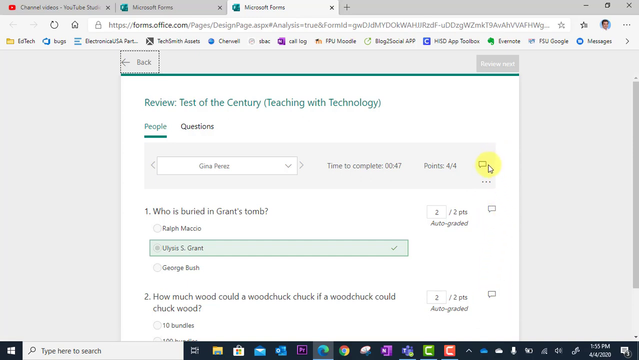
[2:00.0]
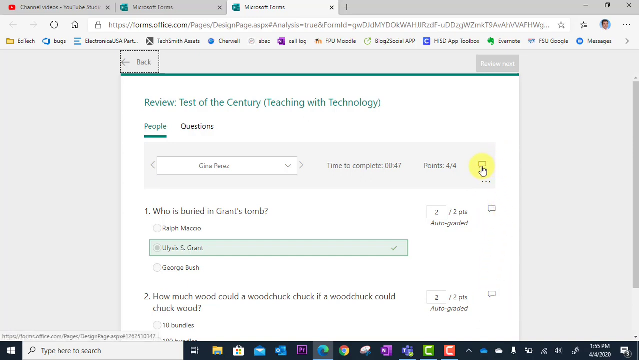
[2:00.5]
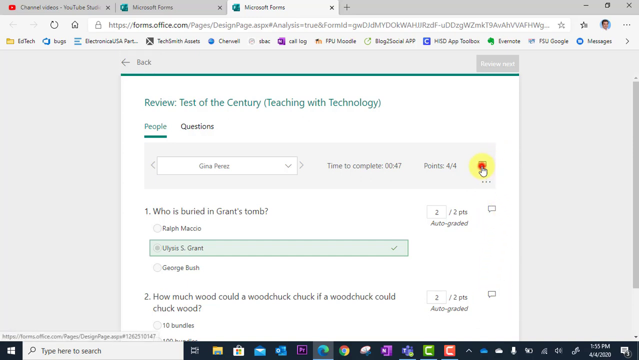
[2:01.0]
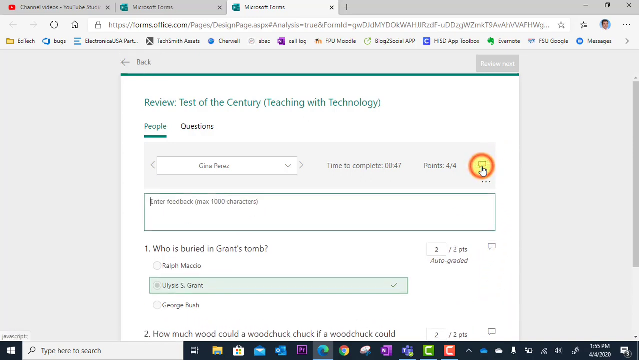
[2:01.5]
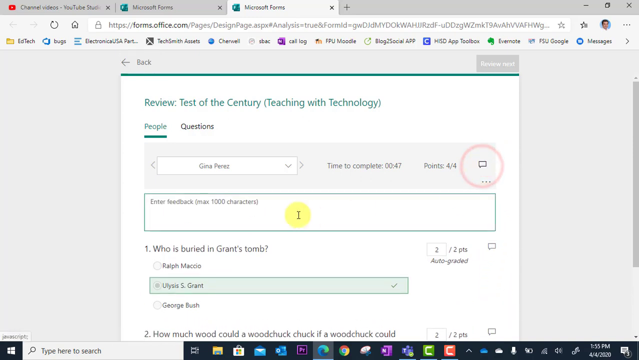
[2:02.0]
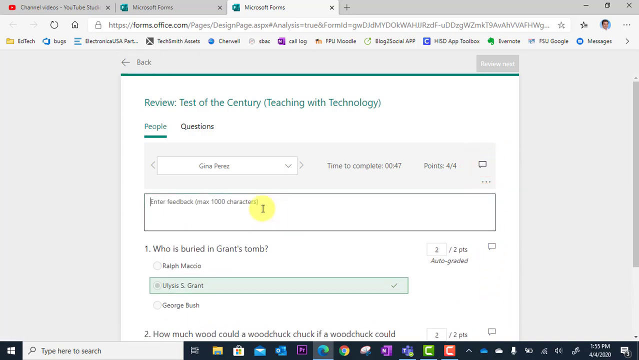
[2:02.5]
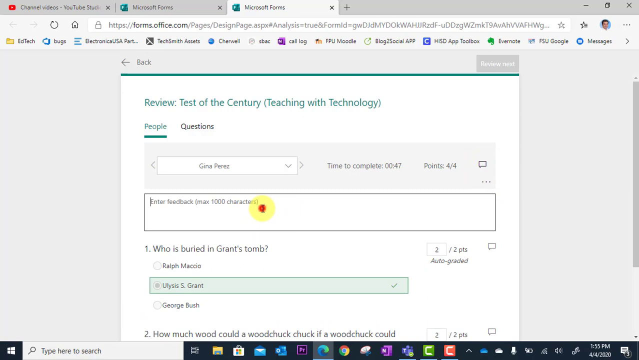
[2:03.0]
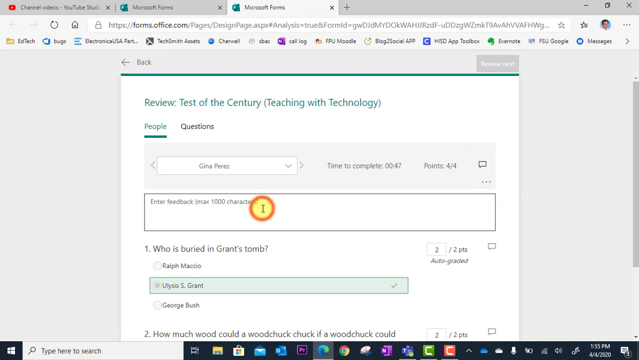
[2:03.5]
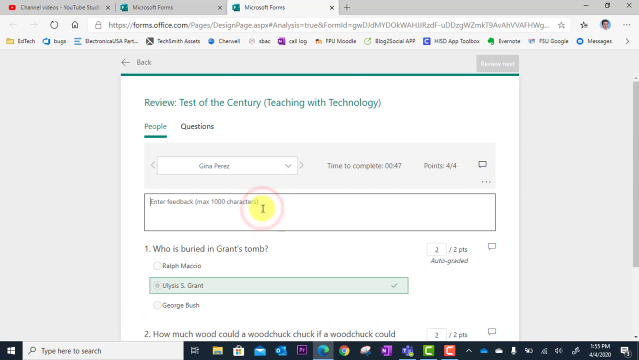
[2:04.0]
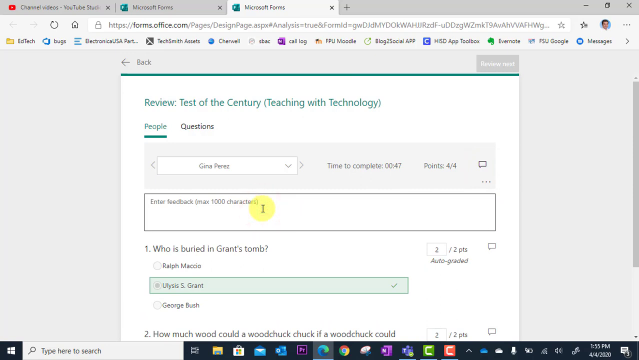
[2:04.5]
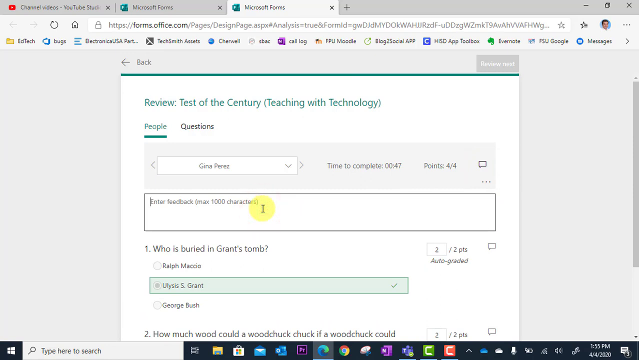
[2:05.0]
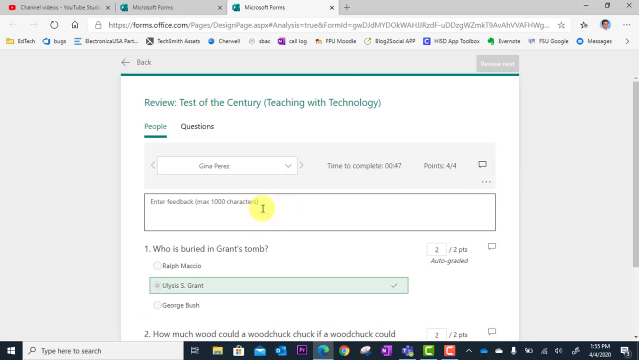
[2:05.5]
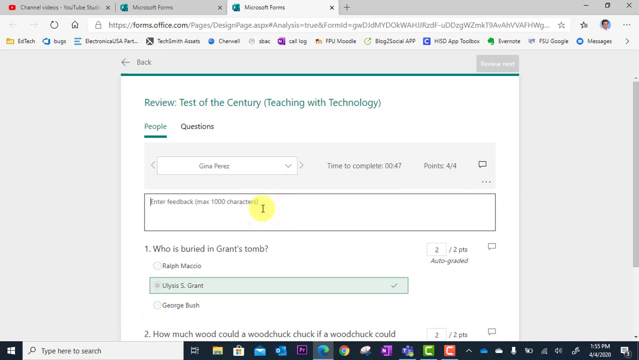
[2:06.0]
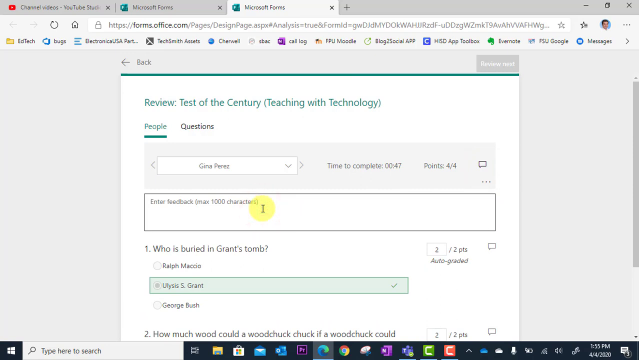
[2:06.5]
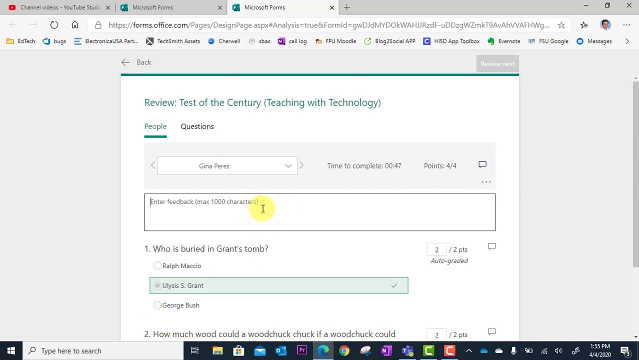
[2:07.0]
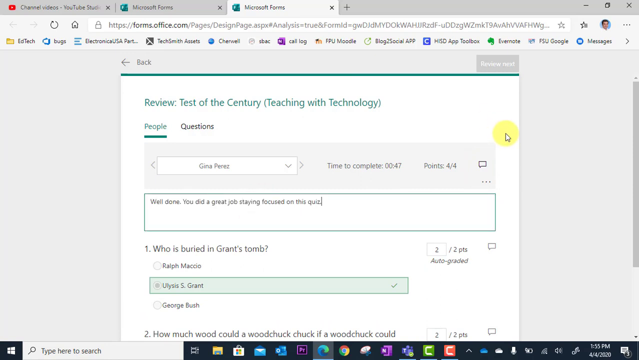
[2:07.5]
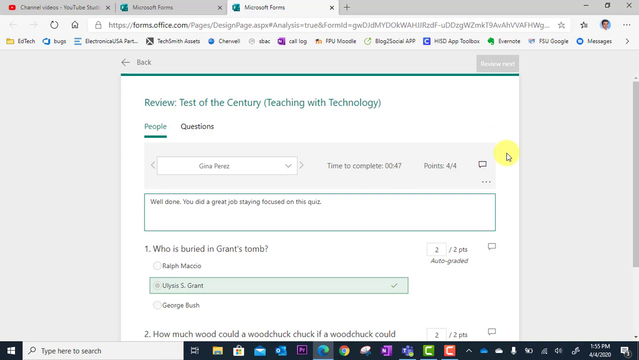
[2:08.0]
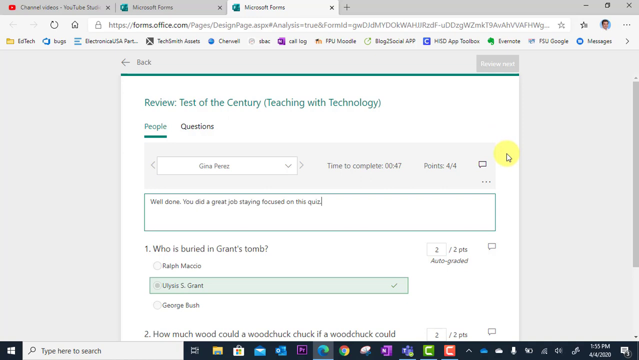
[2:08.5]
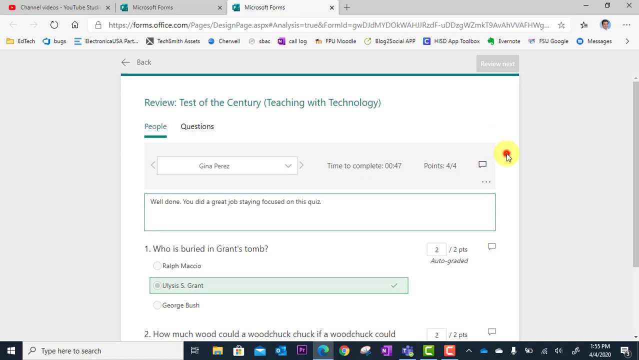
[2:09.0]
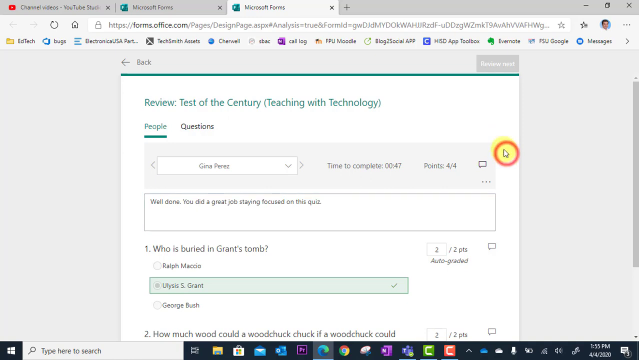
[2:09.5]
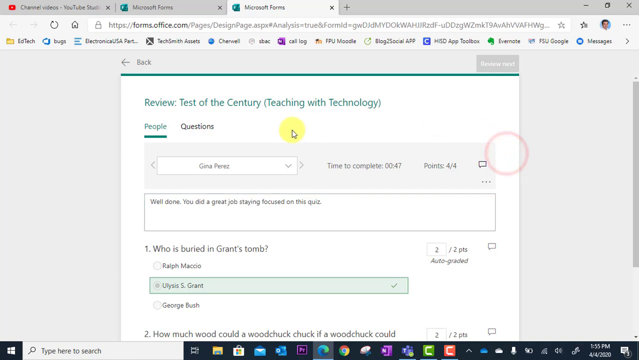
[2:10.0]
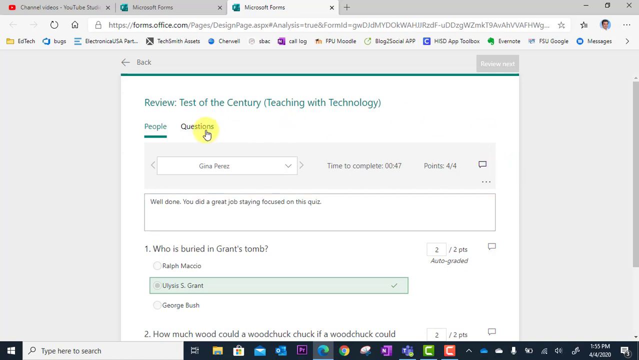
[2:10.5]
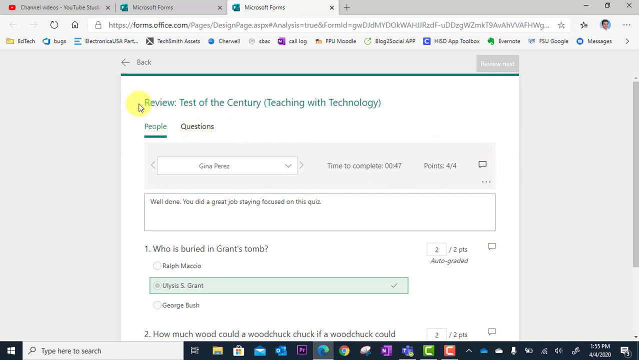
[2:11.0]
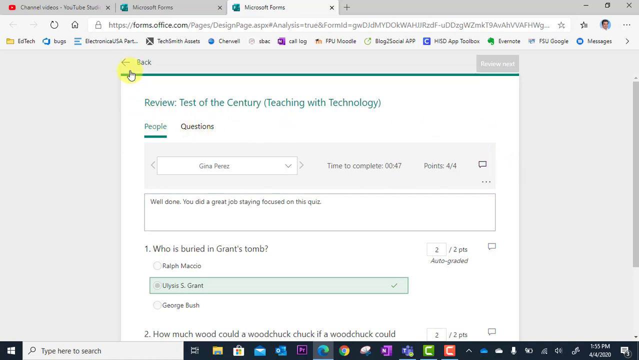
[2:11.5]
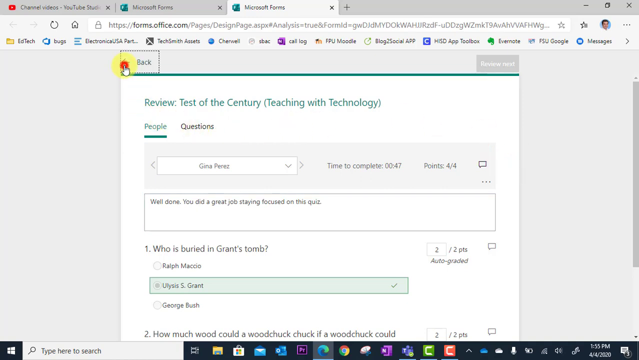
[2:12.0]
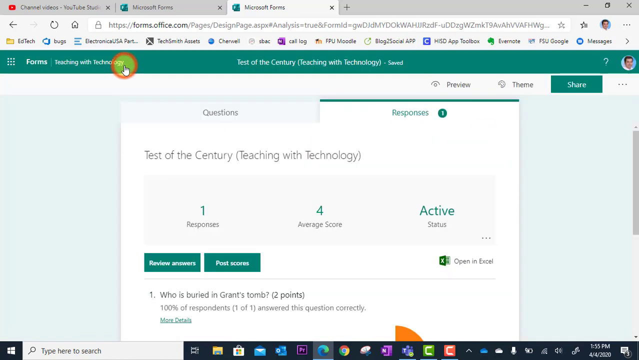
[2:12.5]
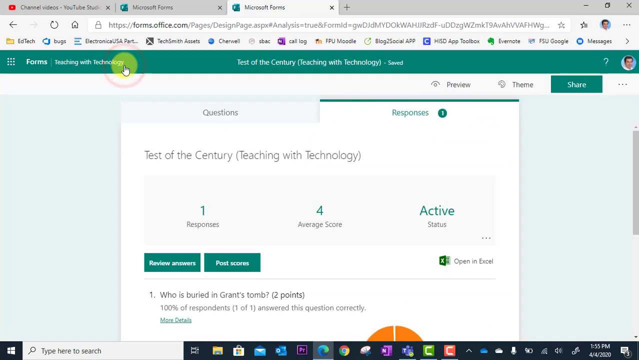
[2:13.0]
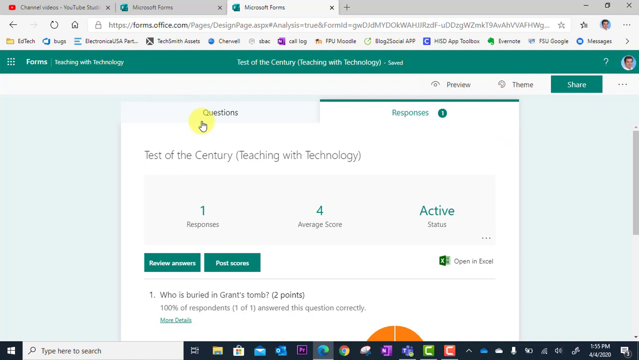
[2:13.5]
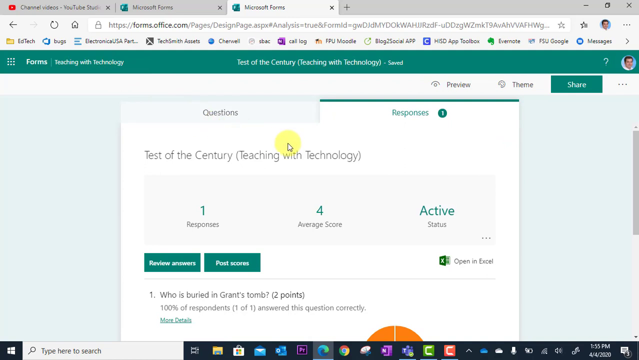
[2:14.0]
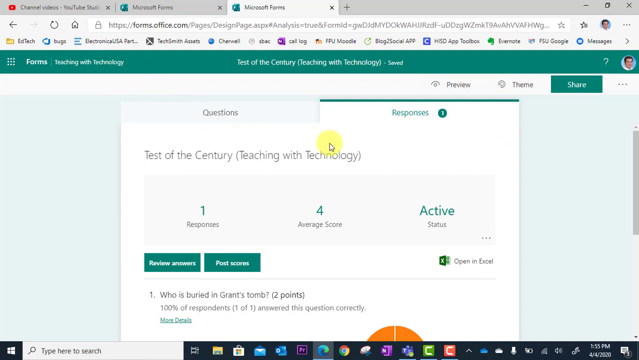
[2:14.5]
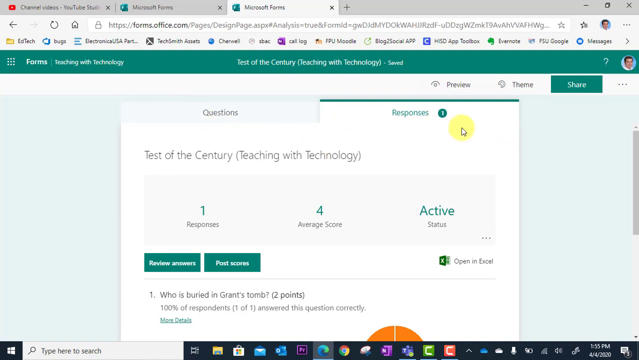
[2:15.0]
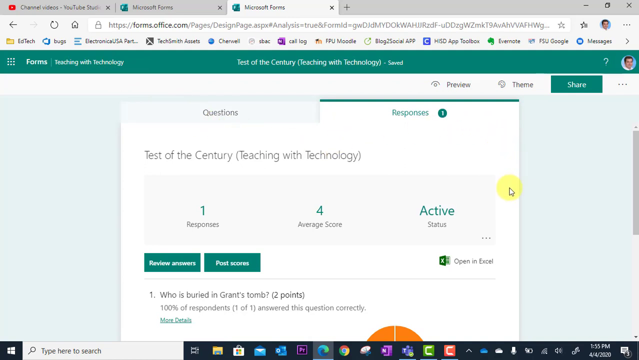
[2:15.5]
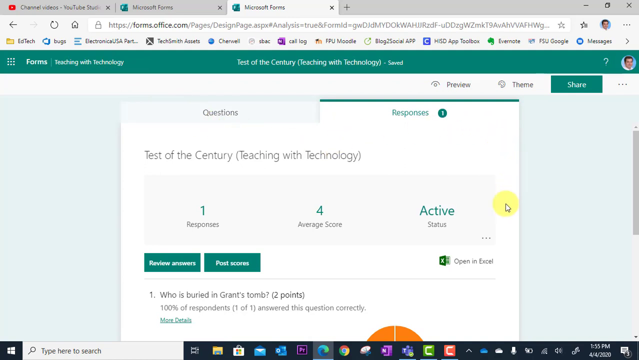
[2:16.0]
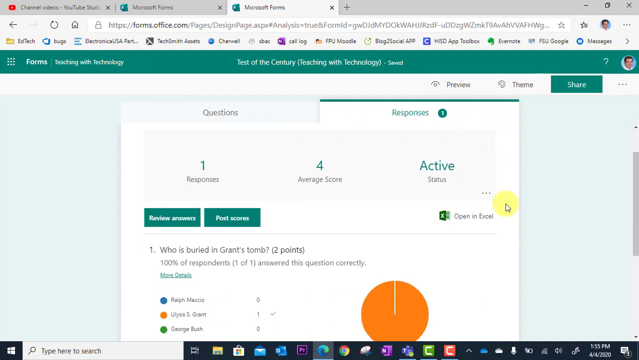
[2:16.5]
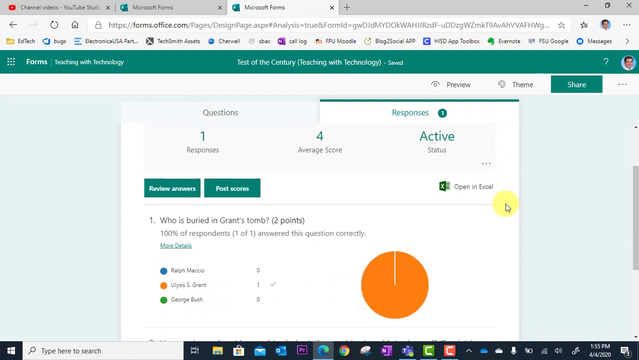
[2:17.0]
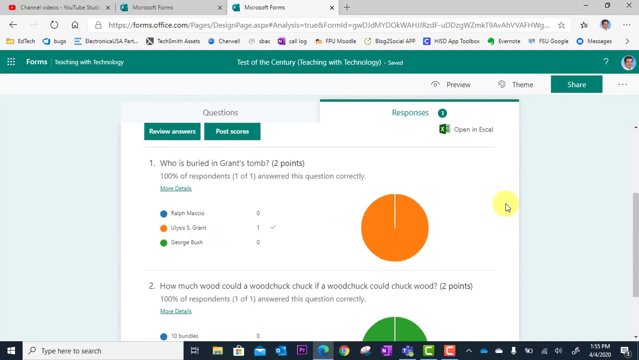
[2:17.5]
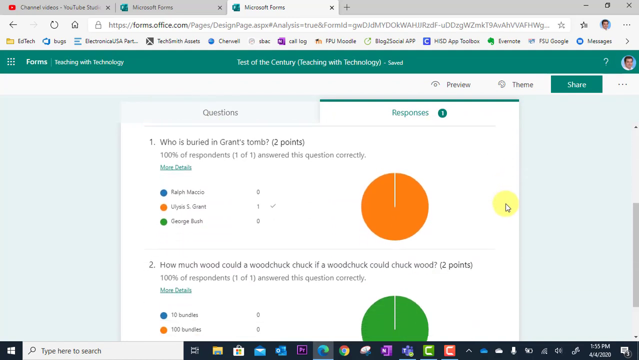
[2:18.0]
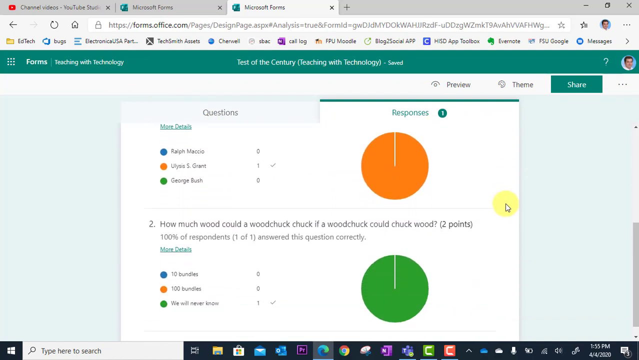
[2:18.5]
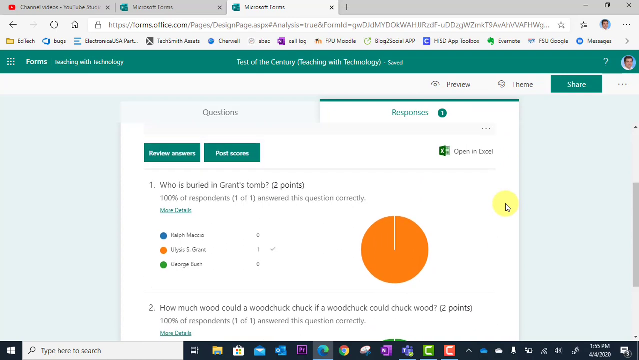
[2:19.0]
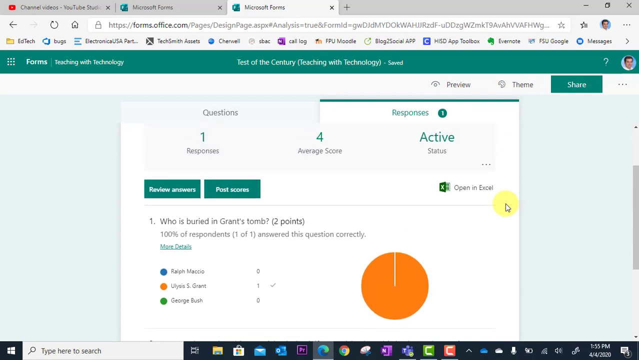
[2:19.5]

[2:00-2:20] The Microsoft Forms grading view for Gina Perez's Test of the Century quiz shows her name in the dropdown menu and a total score of 4 out of 4, earned in 47 seconds. A text box labeled "Enter feedback, max 1,000 characters" appears directly below her name and score, ready for typed comments. The scene then transitions to a broader responses overview page for the quiz. At the top, summary statistics show one response, an average score of four, and that the quiz is active. Buttons labeled "Reviews," "Answers," and "Postscores" are visible on the left. An "Open in Excel" link appears on the right below the summary. Results for each question are shown in chart form: for question one, who is buried in Grant's tomb, the graph is 100% solid for Grant; for question two, how much wood could a woodchuck chuck if a woodchuck could chuck wood, the chart is a solid green circle, showing 100% correct responses for "we will never know." The layout has teal headers and a white background, framed by the visible browser tabs and bookmarks and the Windows taskbar.